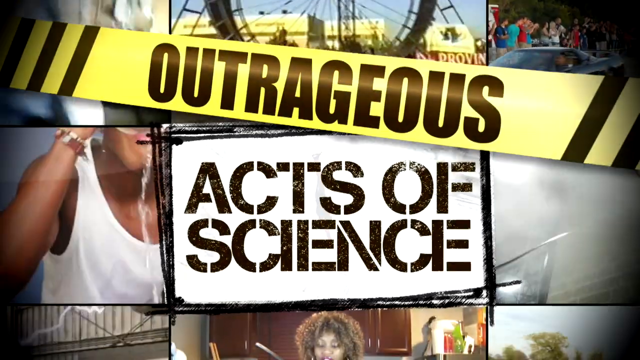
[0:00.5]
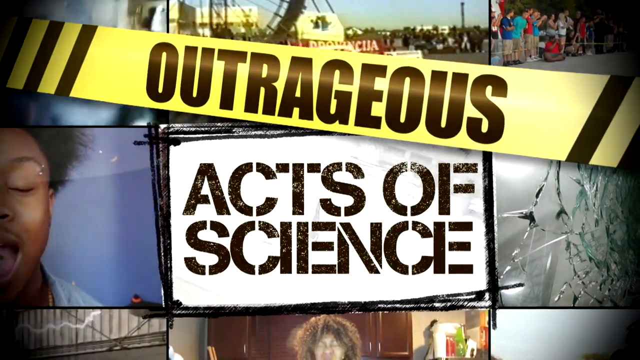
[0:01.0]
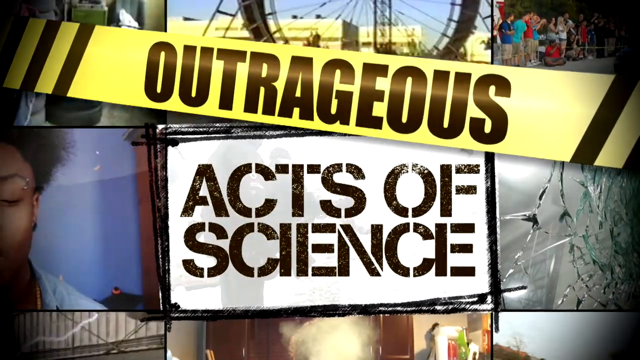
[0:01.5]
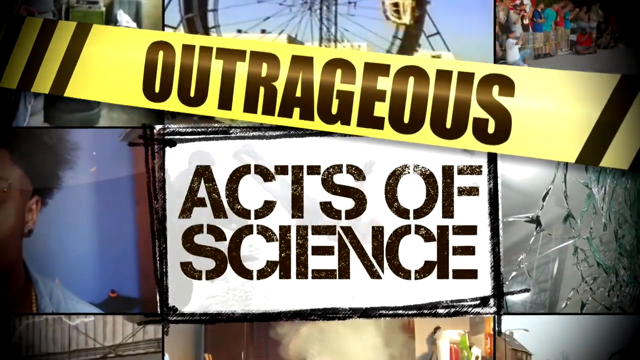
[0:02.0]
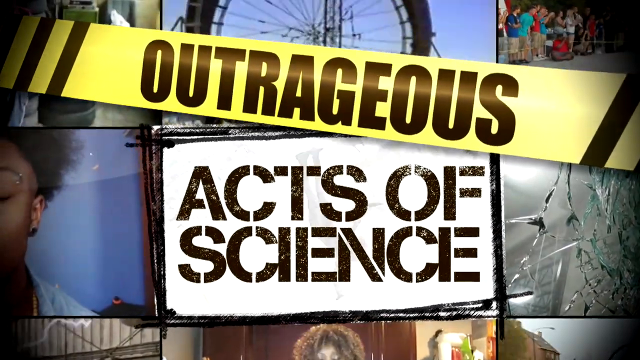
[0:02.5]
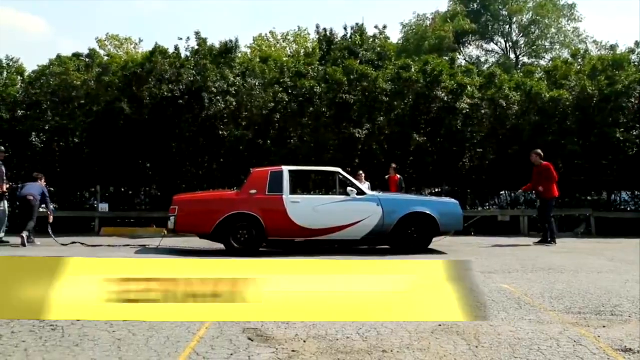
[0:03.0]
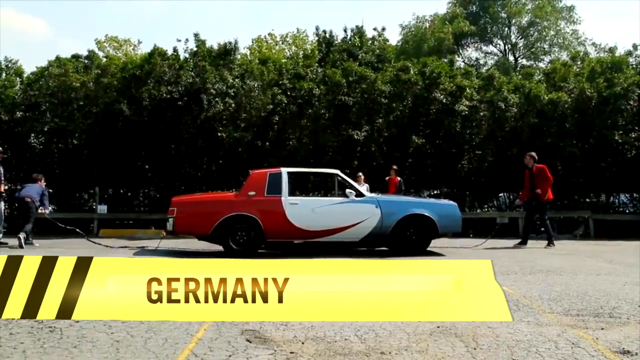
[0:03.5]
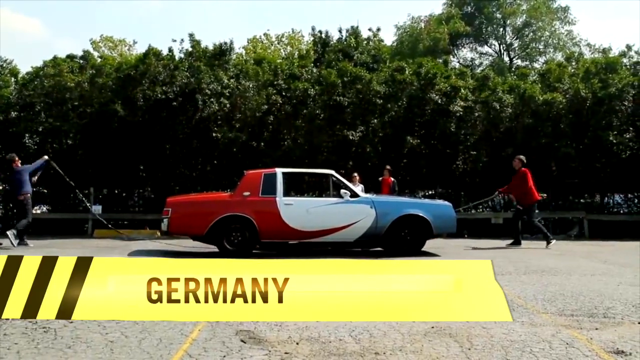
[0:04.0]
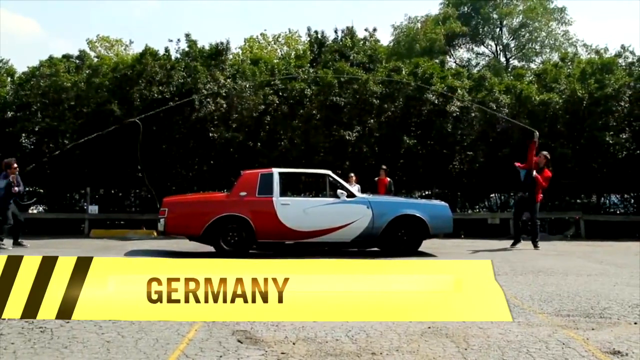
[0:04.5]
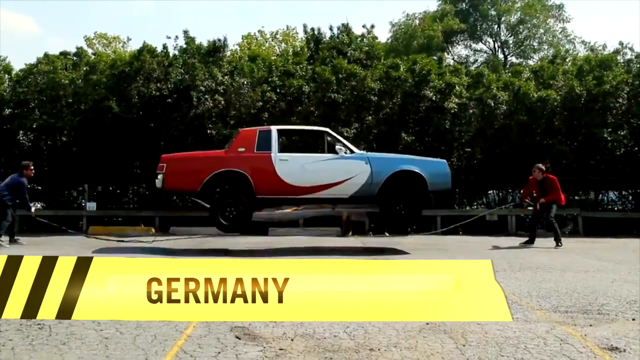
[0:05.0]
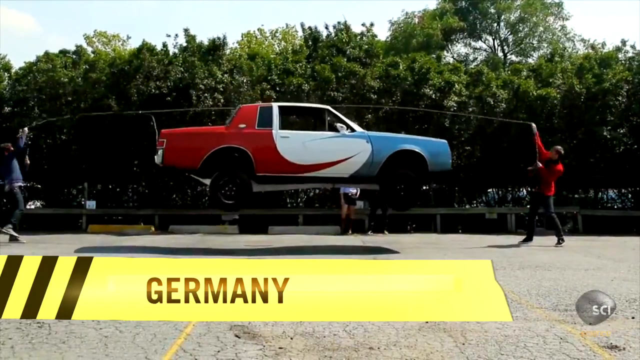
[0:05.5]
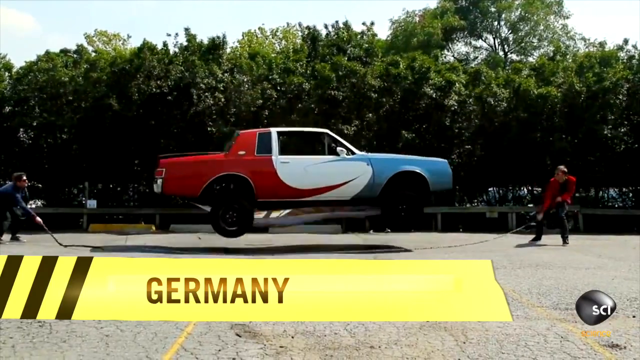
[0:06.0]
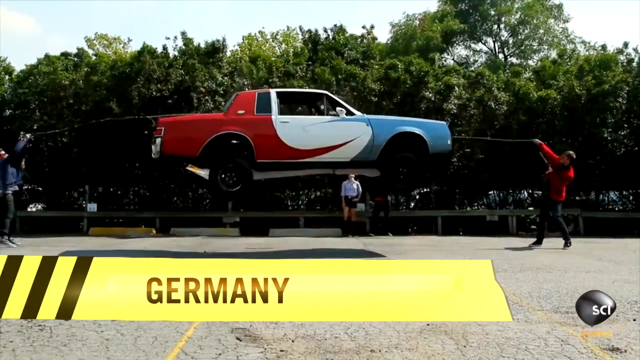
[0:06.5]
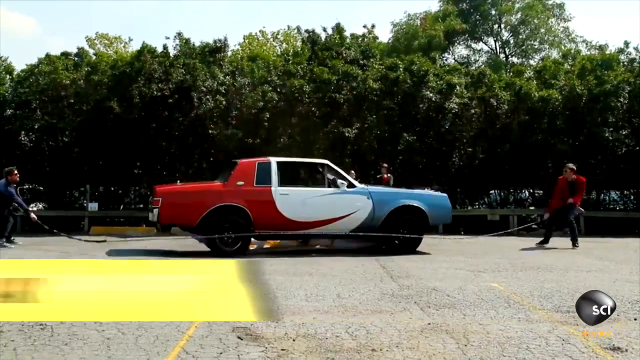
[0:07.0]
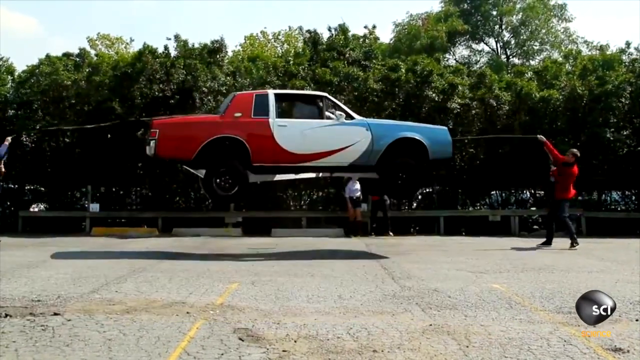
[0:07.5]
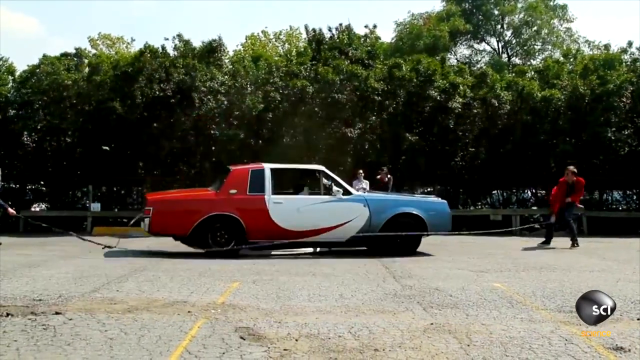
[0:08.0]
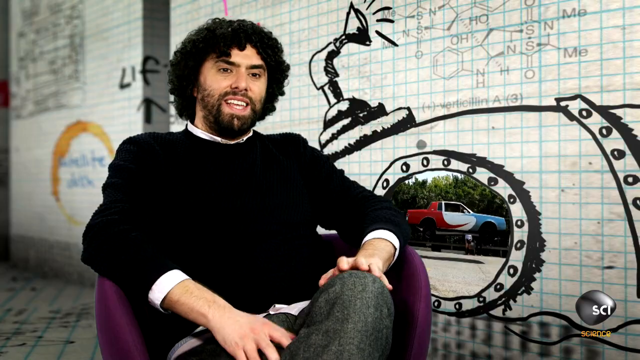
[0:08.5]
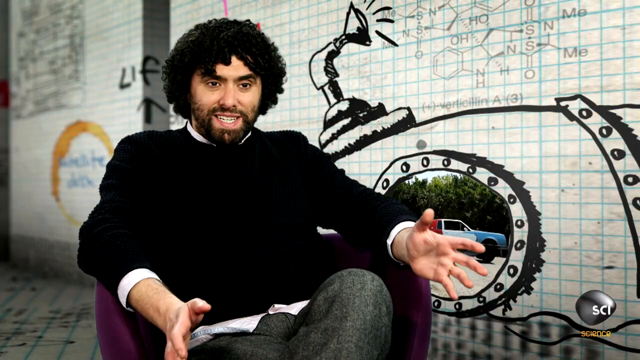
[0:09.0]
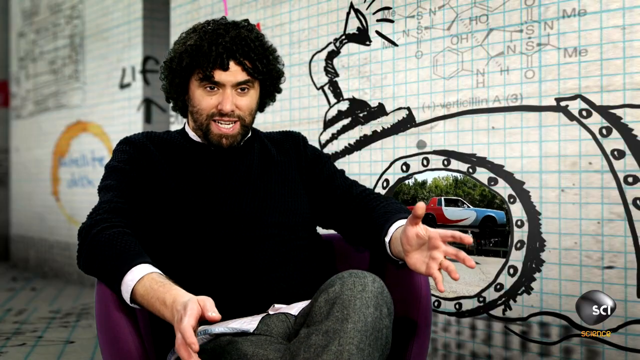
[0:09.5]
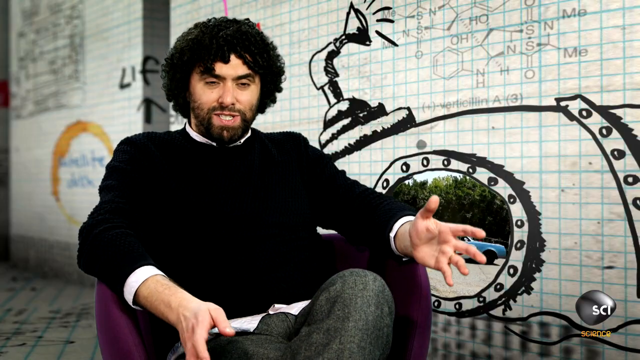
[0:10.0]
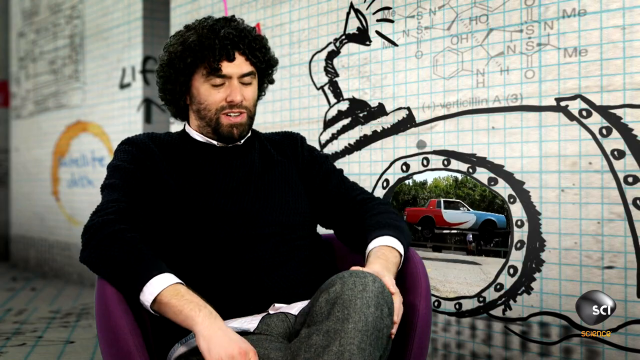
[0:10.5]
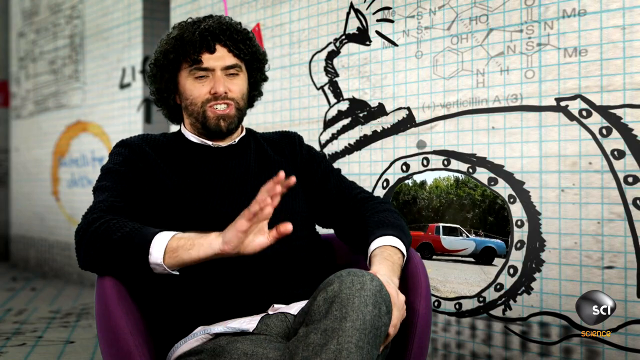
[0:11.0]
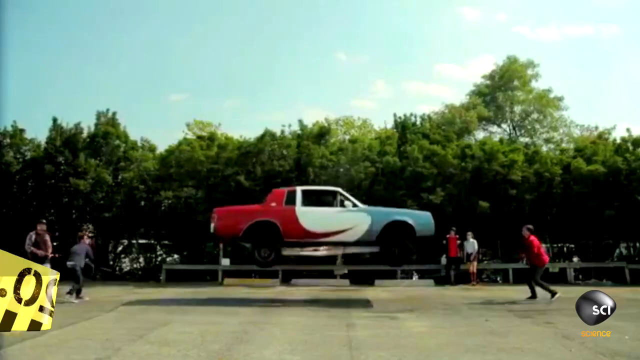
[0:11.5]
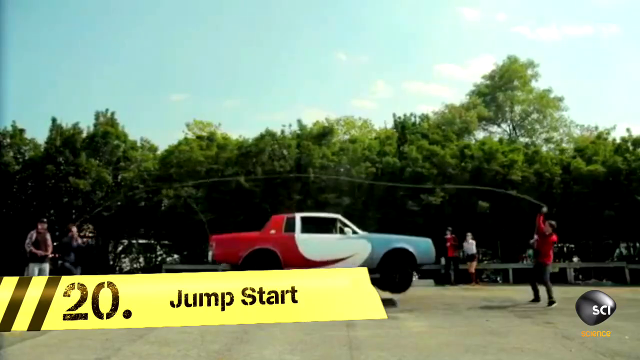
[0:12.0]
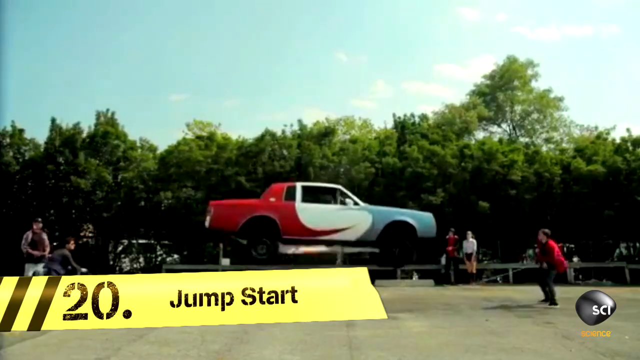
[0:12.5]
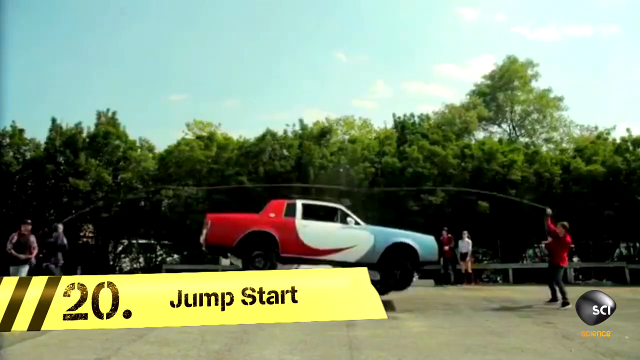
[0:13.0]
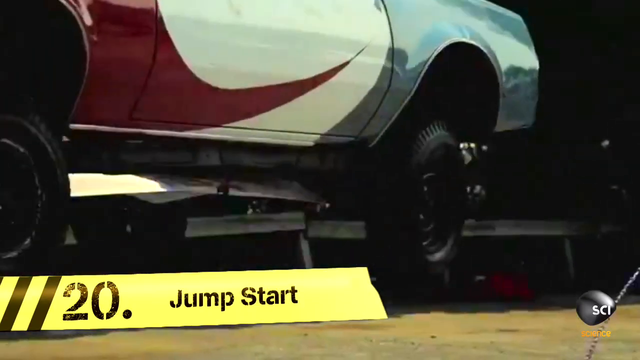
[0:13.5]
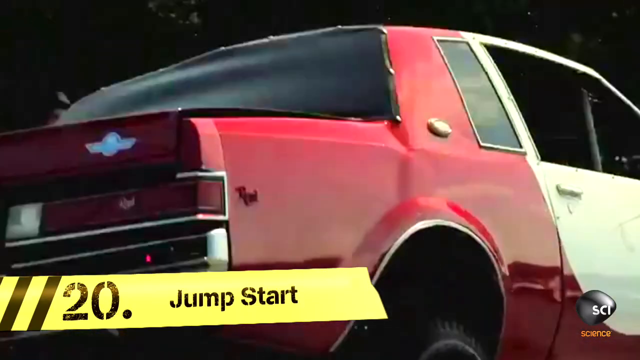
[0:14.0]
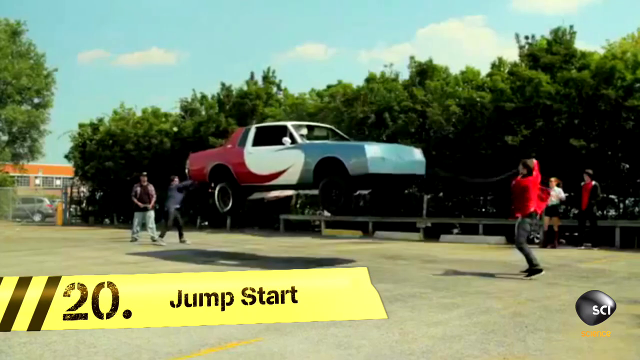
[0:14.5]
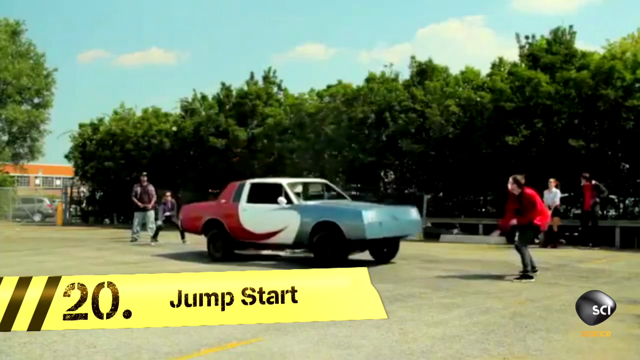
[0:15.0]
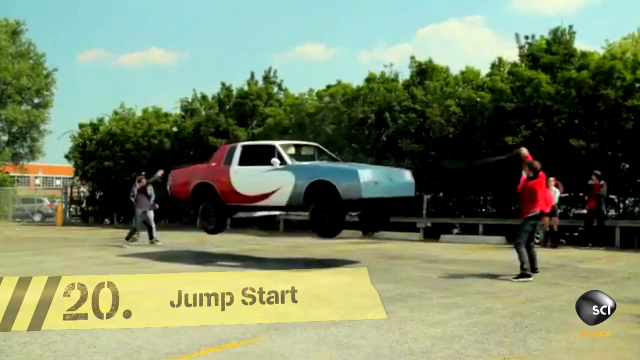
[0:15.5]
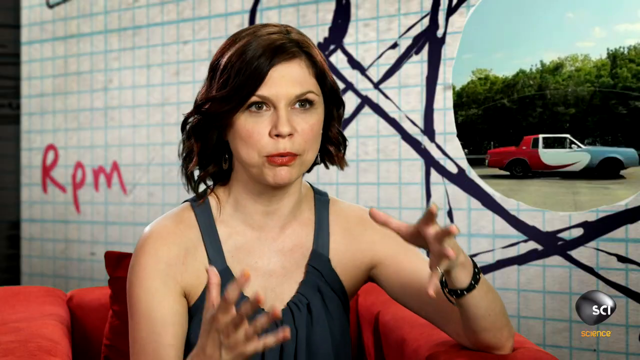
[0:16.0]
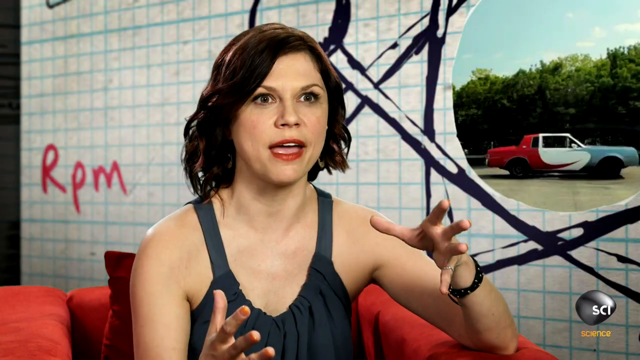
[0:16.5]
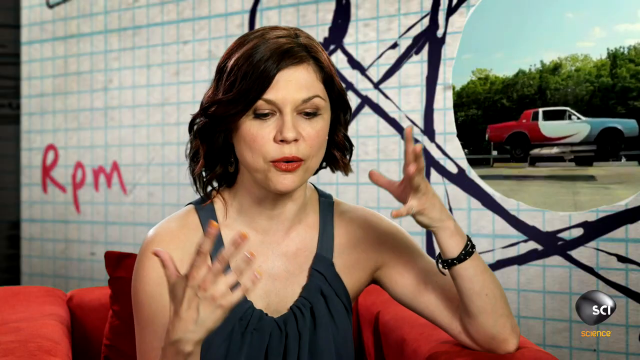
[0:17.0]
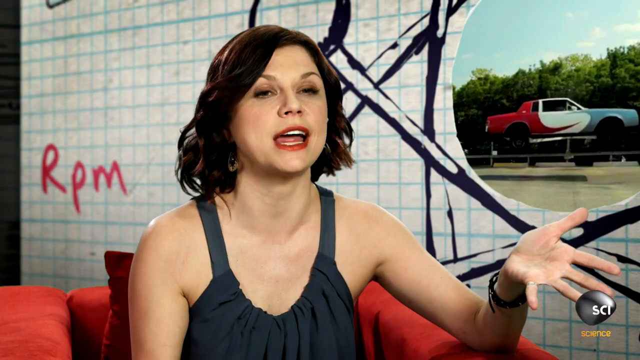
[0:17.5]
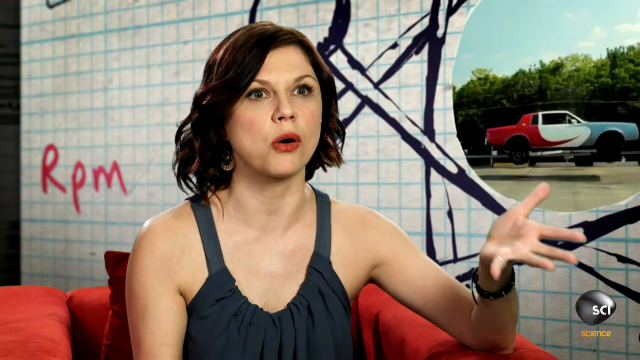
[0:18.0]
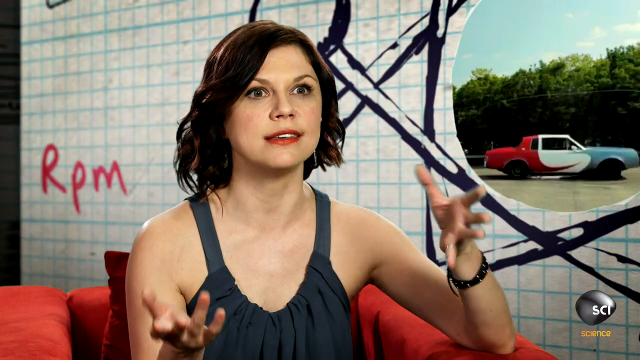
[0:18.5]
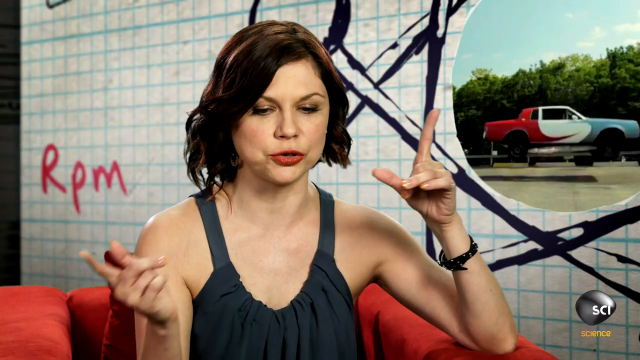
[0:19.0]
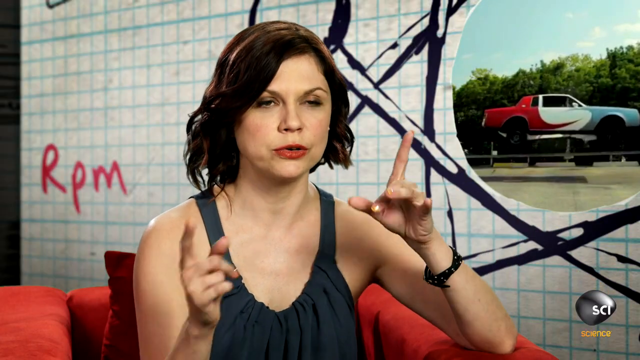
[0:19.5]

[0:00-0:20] The video appears to be from a program called Outrageous Acts of Science. The opening scene, viewed side on, shows two people, one in a red top and one in a blue top, with a red, white and blue car between them. The people at the ends appear to be swinging a skipping rope around, and the car jumps over the top of the rope as it swings. A small caption shows that the footage comes from Germany, that it is number 20 in their list, and that it is called "Jumpstart". Two people talk about the scene. The first is a man who looks to be in his 20s or early 30s, wearing a white shirt and a black jumper, with a black beard and black curly hair. He is sat in a purple chair in a room with white tiles bearing various writing and symbols, which appear to have been added afterwards using CGI. The second is a woman, wearing a black vest top, with short, straight black hair and red lipstick, and a black bracelet on her left wrist. She is probably younger than the man, probably in her early twenties.